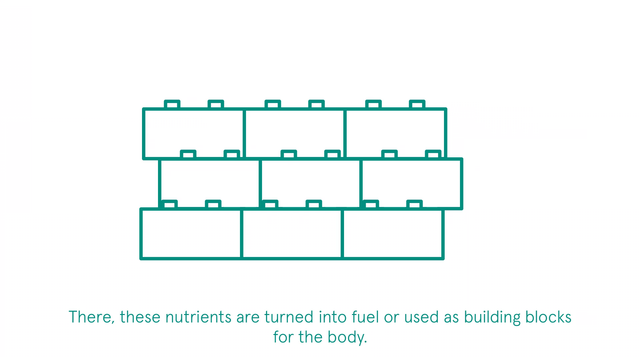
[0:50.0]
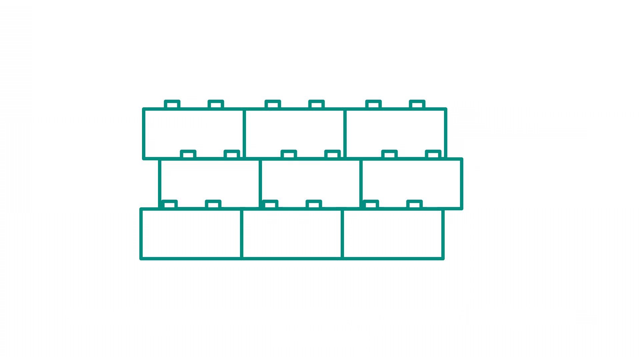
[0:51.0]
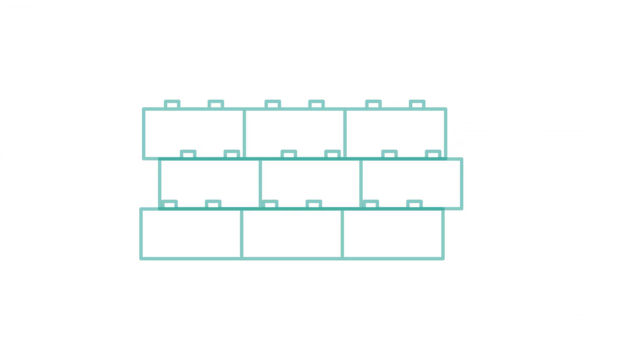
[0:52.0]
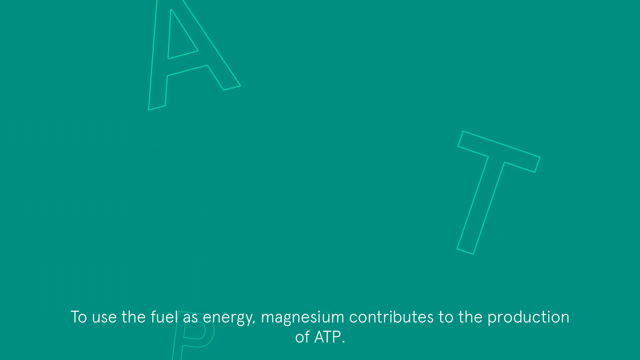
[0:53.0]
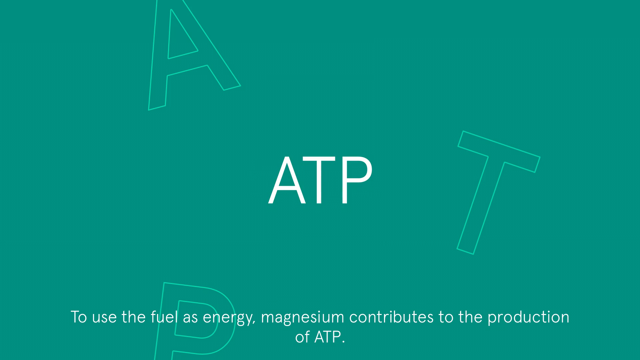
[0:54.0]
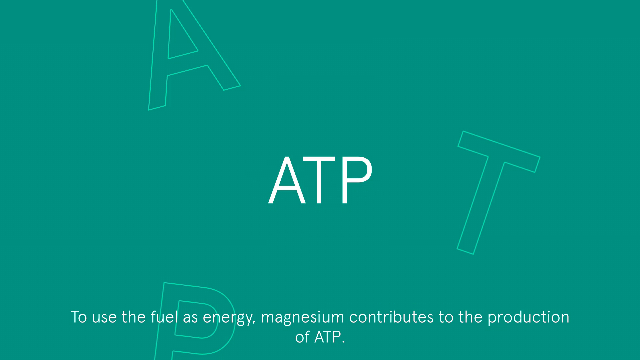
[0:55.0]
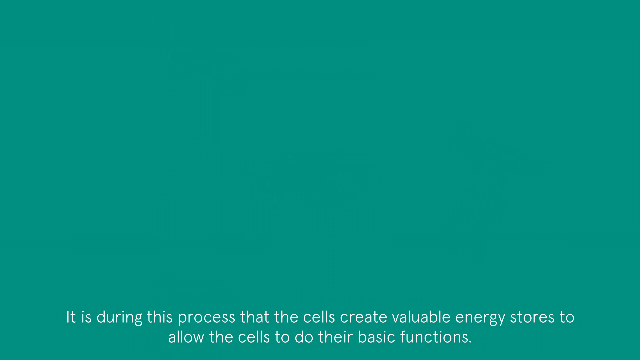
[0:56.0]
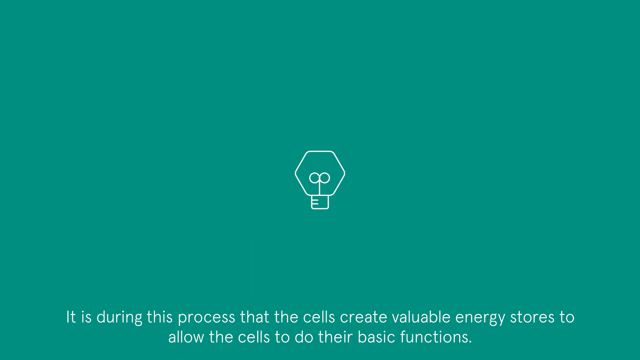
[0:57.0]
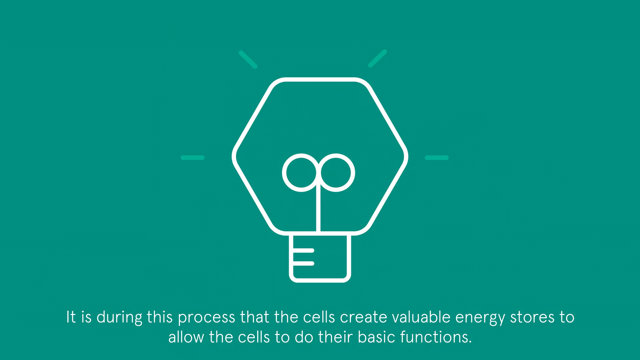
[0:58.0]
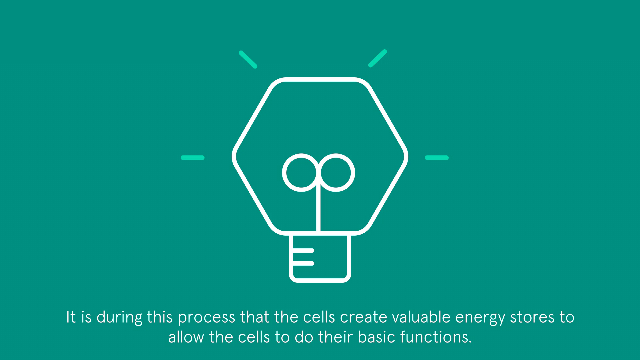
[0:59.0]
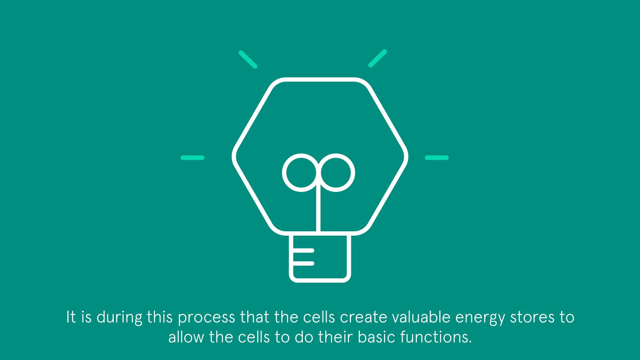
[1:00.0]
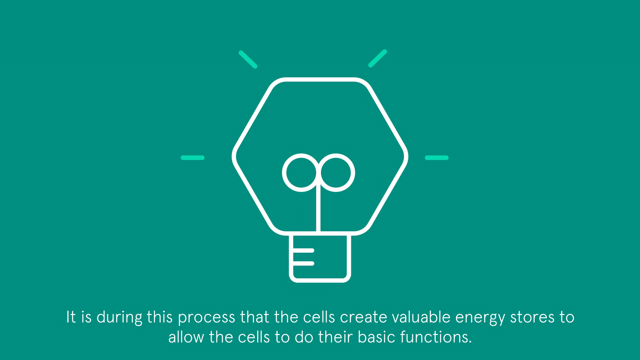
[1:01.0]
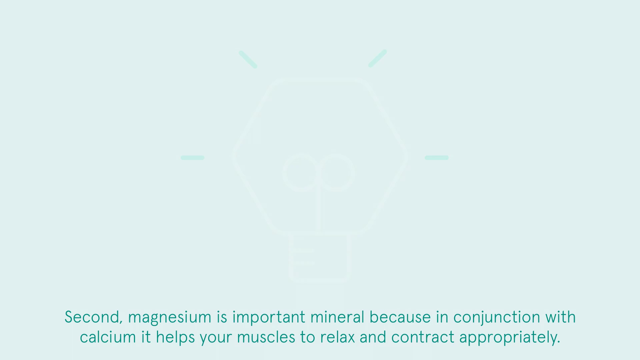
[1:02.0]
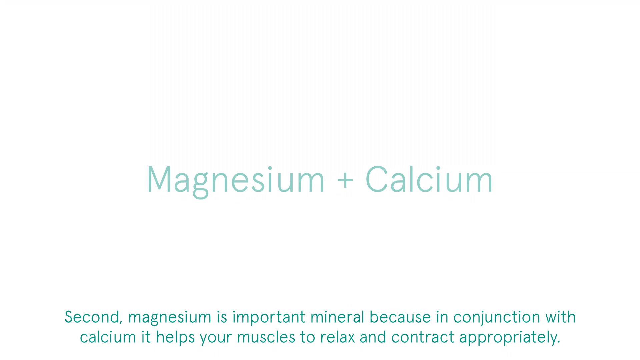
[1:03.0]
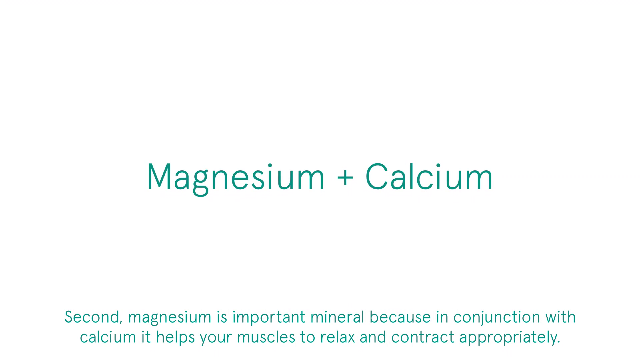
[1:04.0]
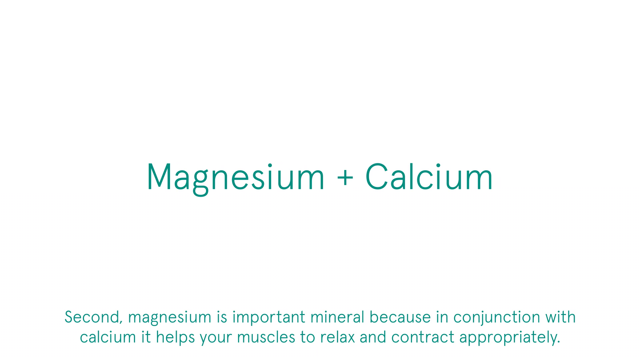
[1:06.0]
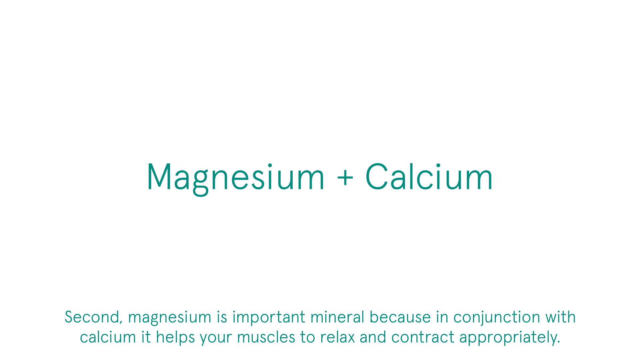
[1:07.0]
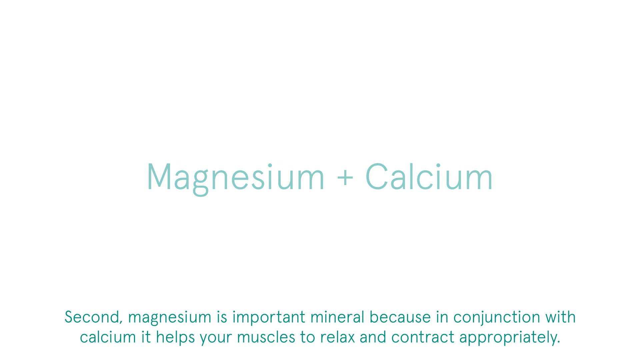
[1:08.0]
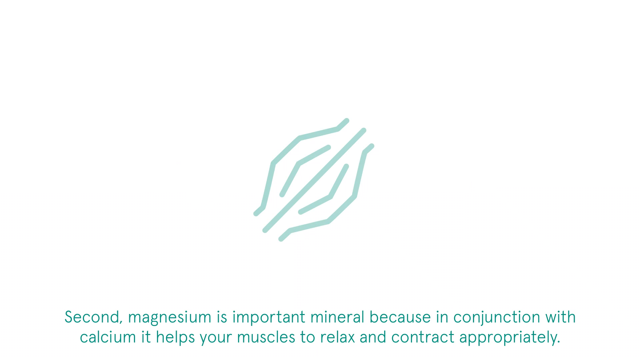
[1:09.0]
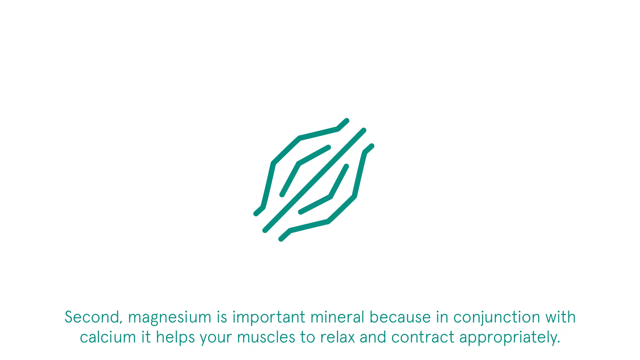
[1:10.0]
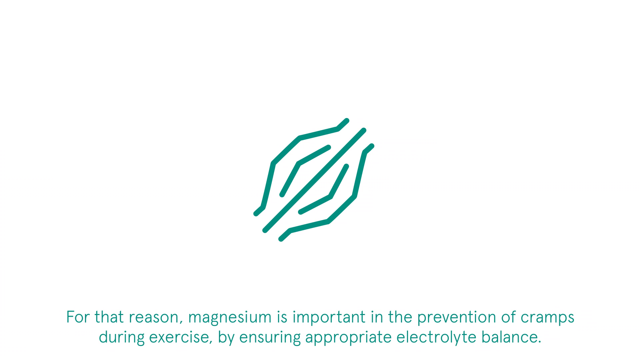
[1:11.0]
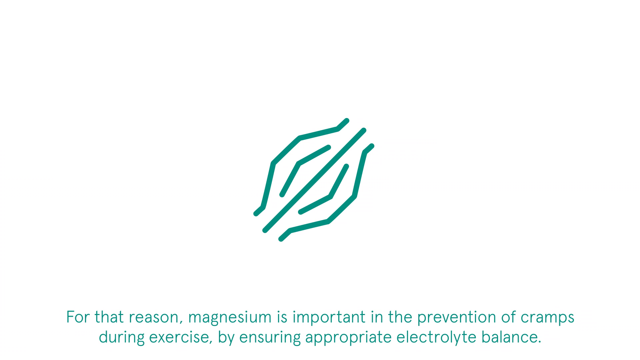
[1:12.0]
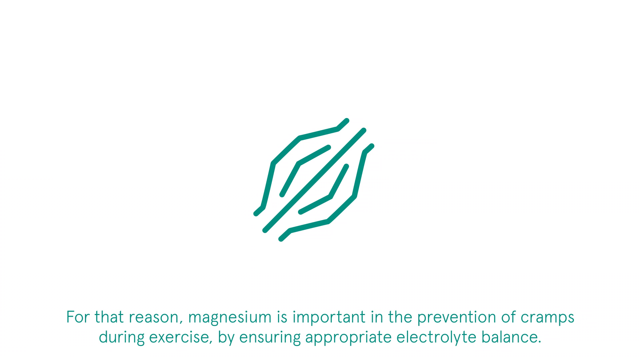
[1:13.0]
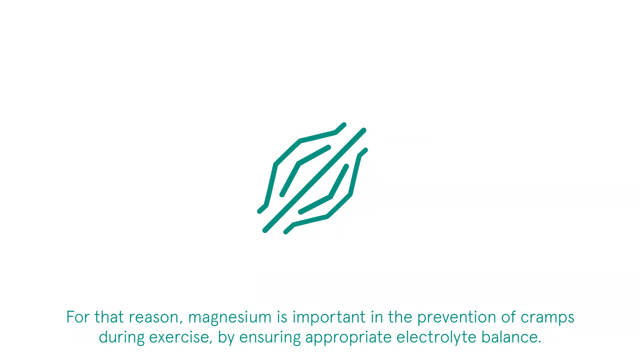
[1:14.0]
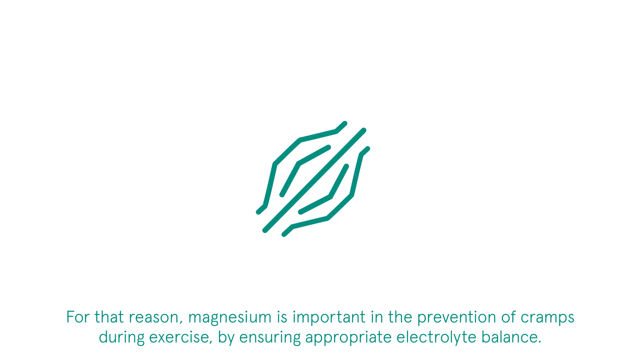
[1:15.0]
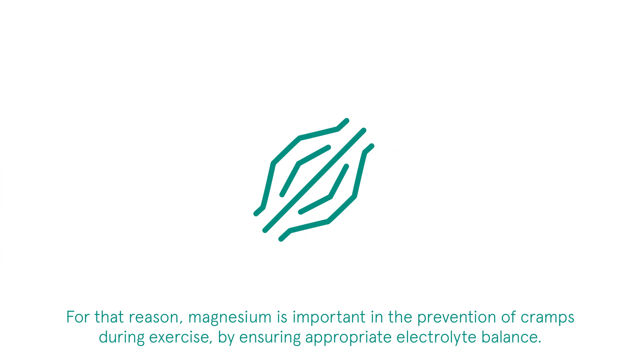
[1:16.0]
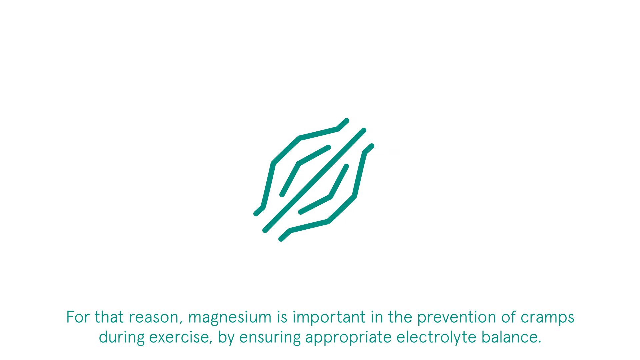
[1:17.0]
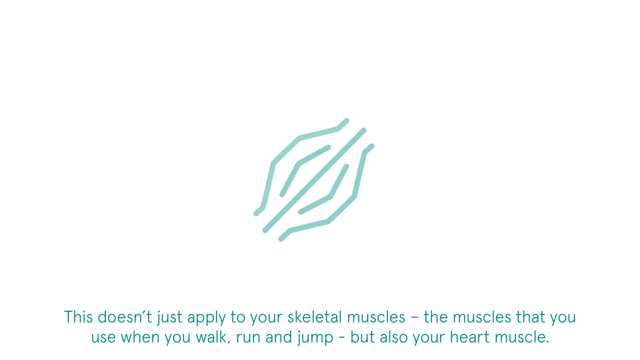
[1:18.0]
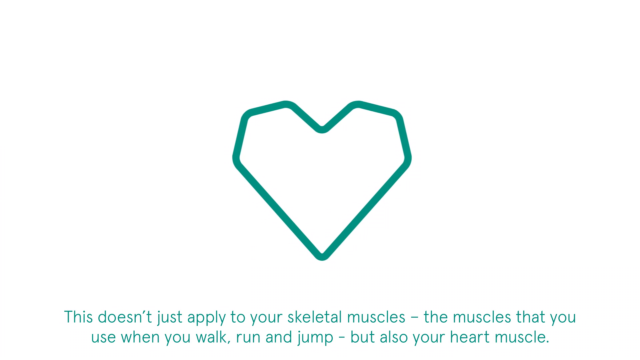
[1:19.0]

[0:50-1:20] A picture that looks like Legos appears: three rows, with three sets of three bricks each, and the middle set slightly off-center to the right so the bricks are staggered like a real brick wall. Text reads "these nutrients are turned to fuel or as building blocks. To use the fuel as energy, magnesium contributes to the production of ATP." This appears on a new slide that is a sort of greenish blue. Next is some type of cell: a hexagon containing what looks almost like a key, made of two circles and a straight line, with something almost like a little ruler sticking out of it. Text says "it is during this process that the cells create valuable energy stores too." Then "magnesium plus calcium" appears, followed by a new slide: "Second, magnesium is an important mineral. It's important in the prevention of cramps during exercise by ensuring appropriate electrolyte balance." A heart then appears.